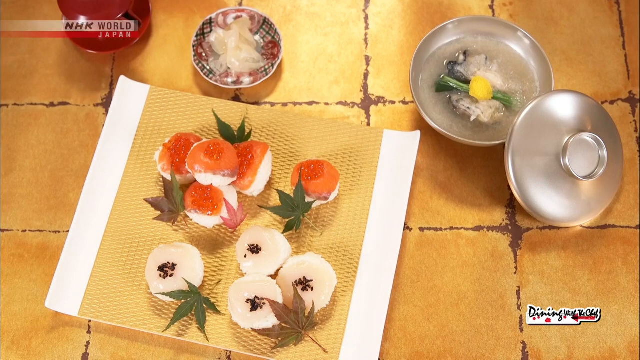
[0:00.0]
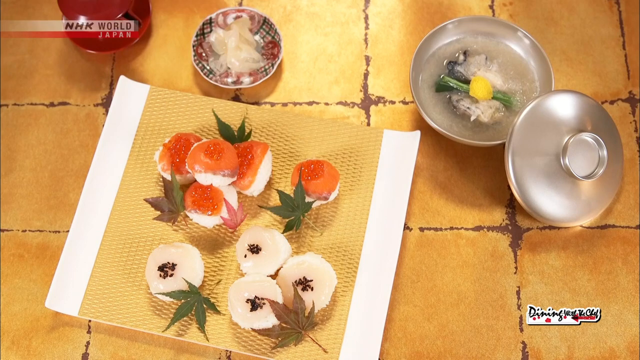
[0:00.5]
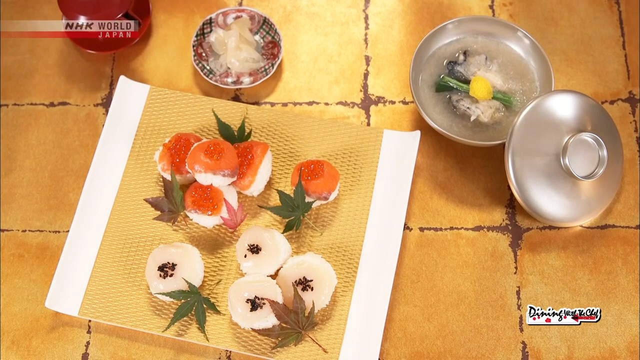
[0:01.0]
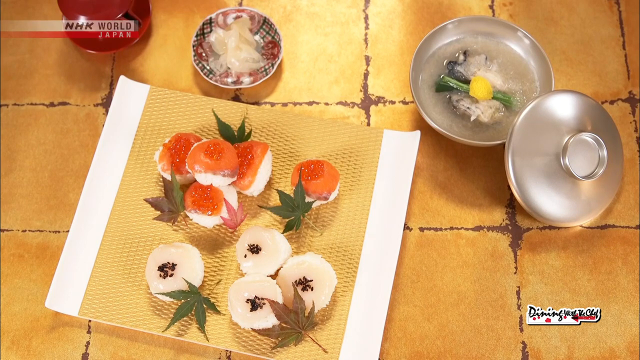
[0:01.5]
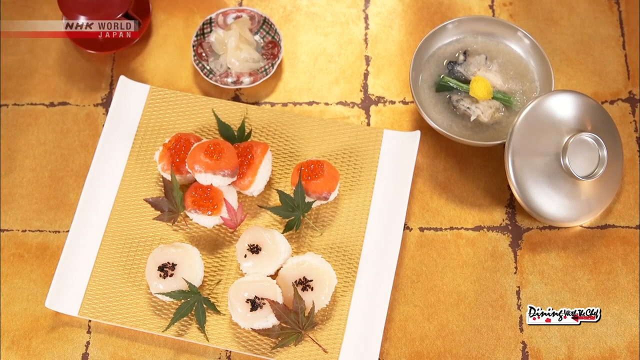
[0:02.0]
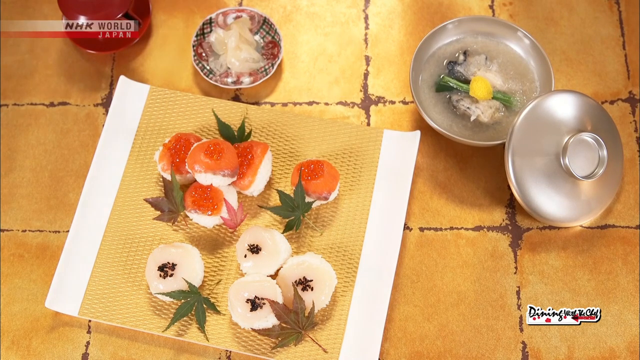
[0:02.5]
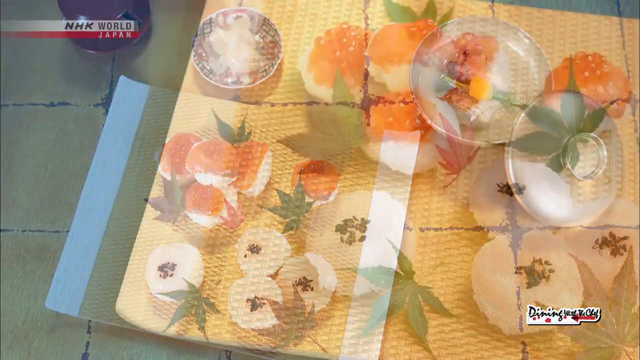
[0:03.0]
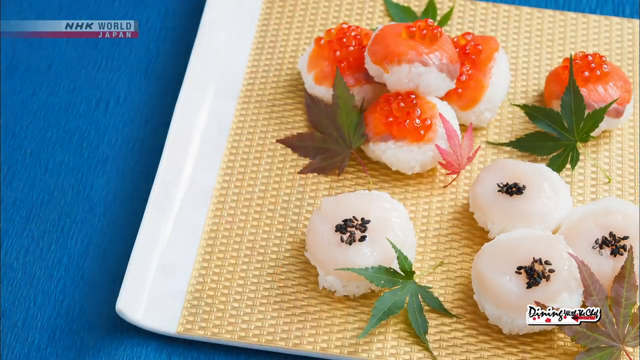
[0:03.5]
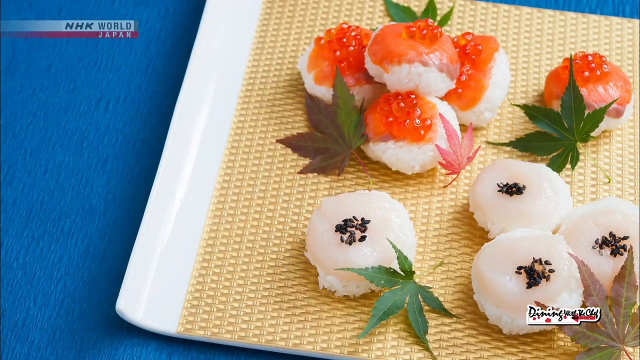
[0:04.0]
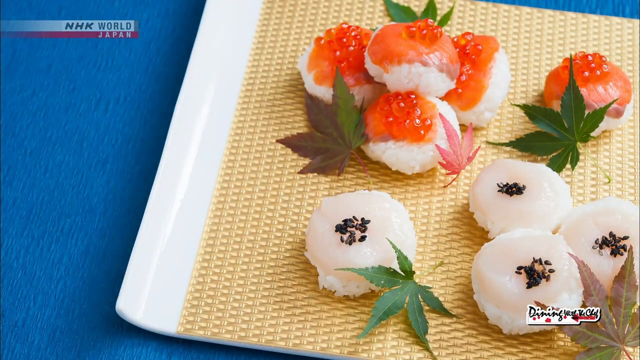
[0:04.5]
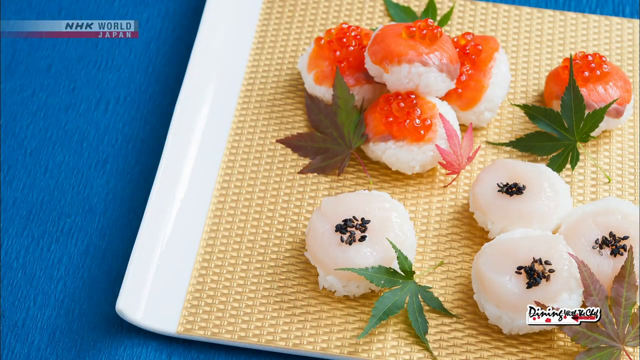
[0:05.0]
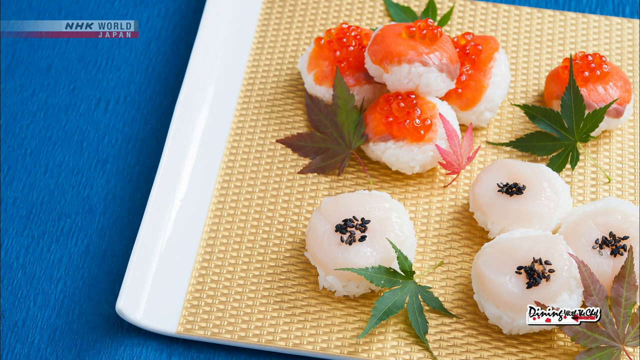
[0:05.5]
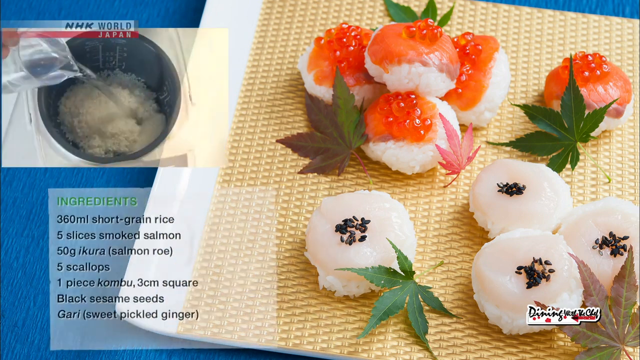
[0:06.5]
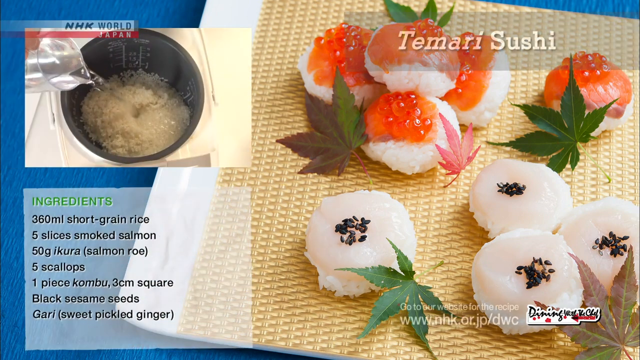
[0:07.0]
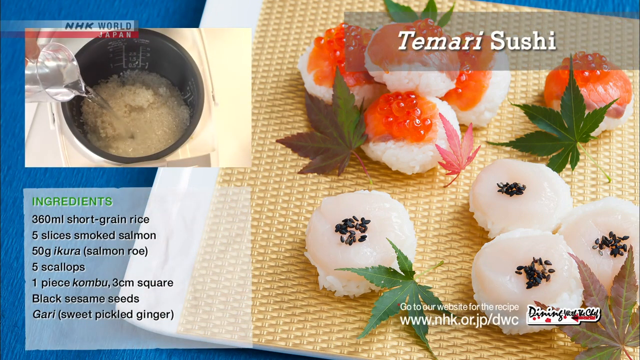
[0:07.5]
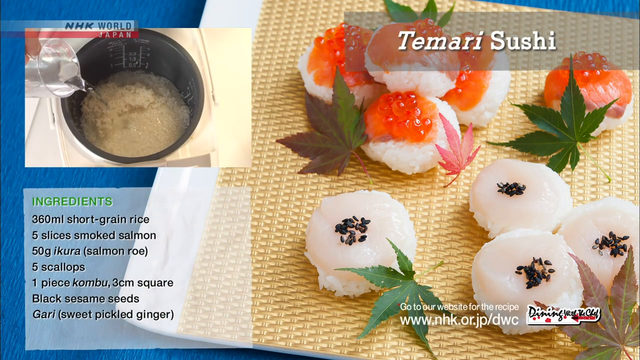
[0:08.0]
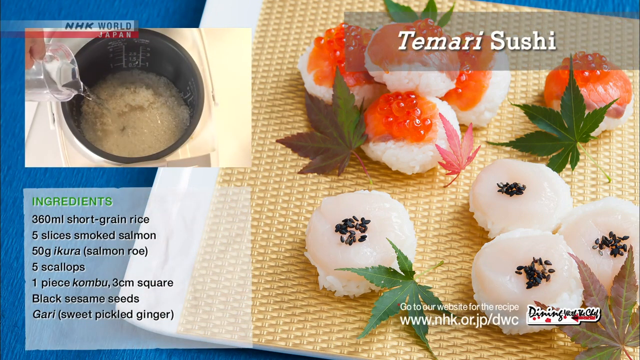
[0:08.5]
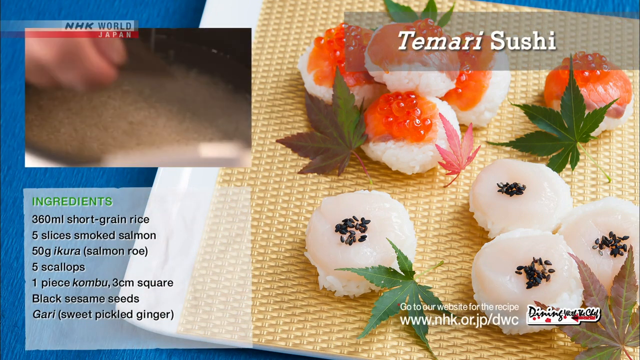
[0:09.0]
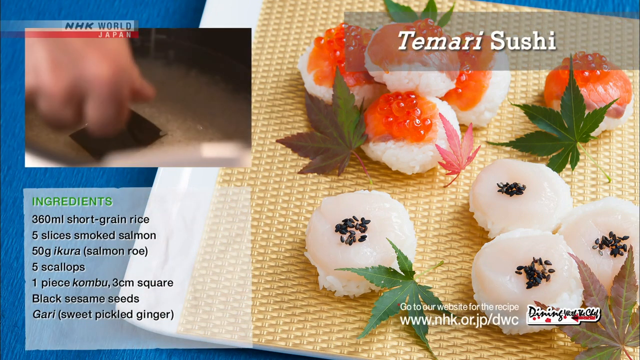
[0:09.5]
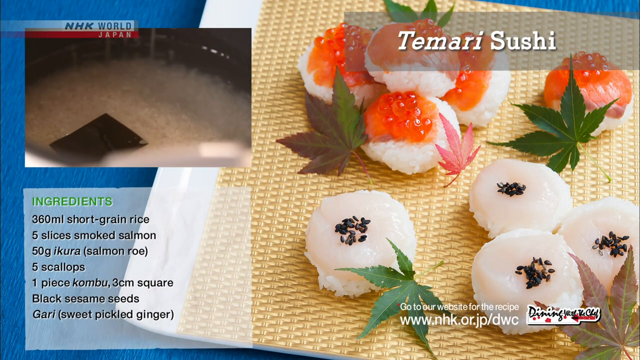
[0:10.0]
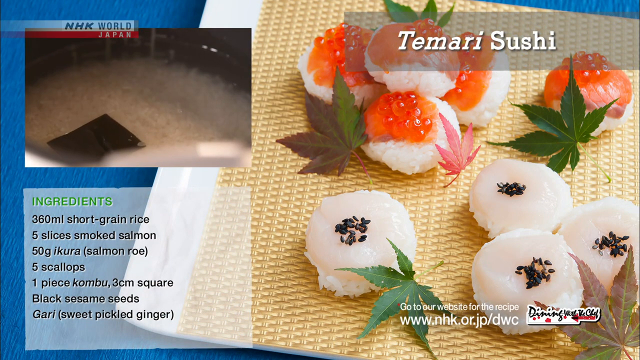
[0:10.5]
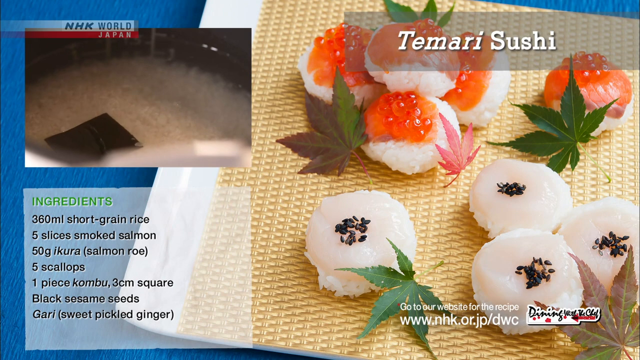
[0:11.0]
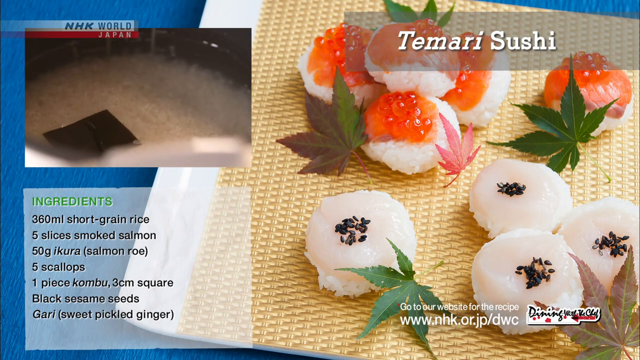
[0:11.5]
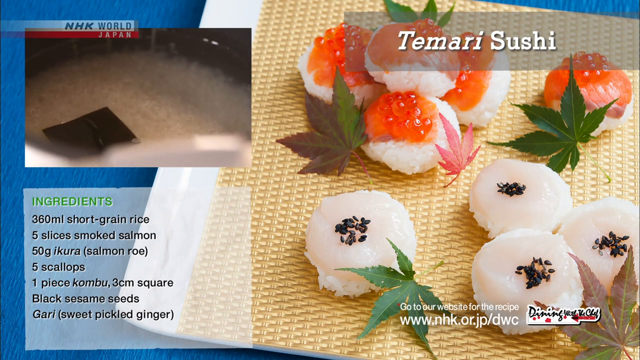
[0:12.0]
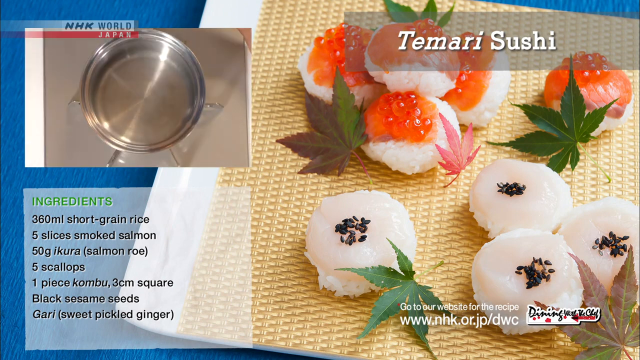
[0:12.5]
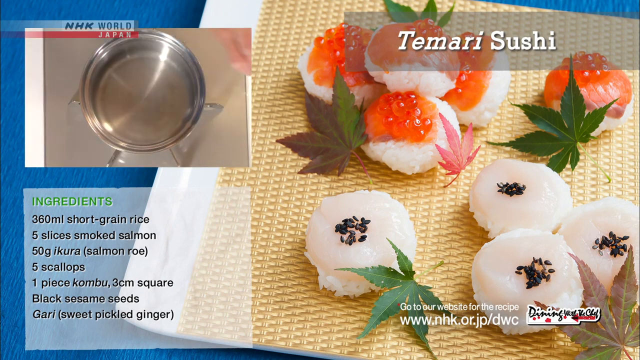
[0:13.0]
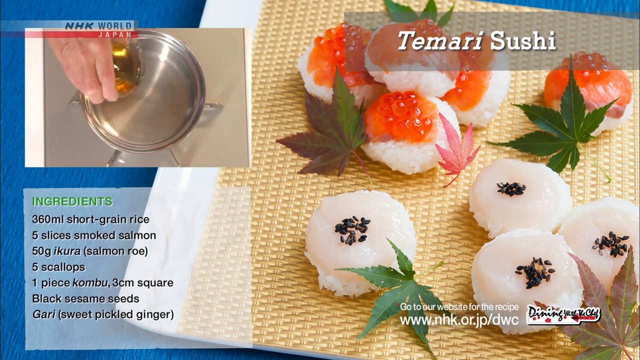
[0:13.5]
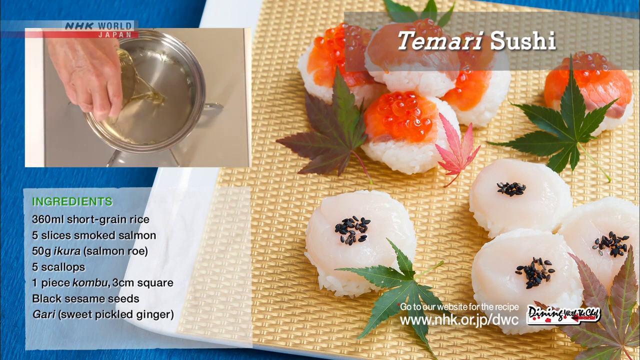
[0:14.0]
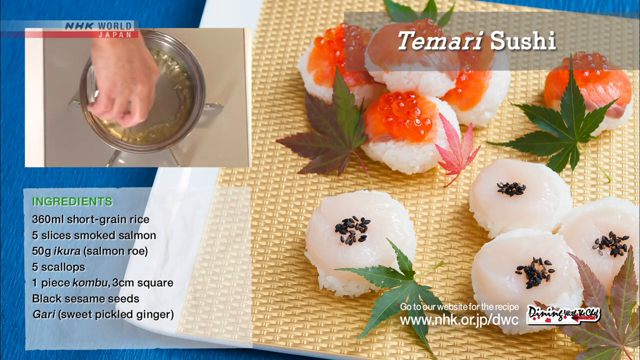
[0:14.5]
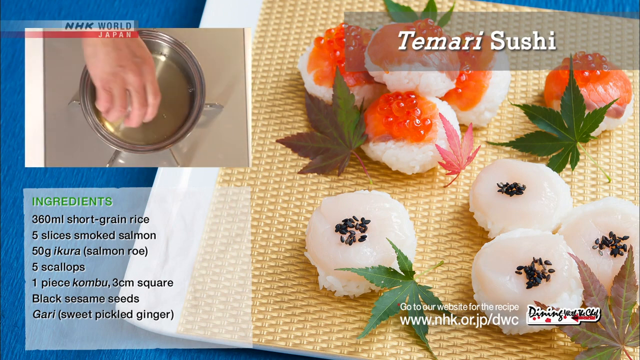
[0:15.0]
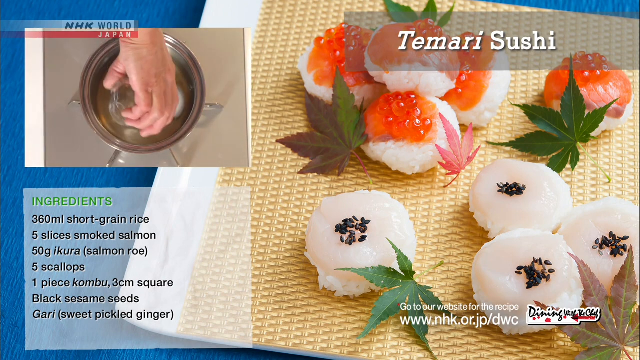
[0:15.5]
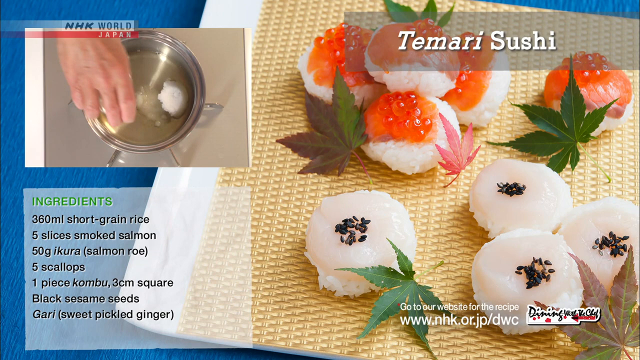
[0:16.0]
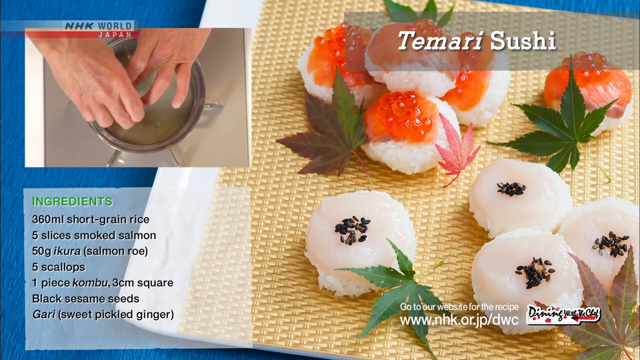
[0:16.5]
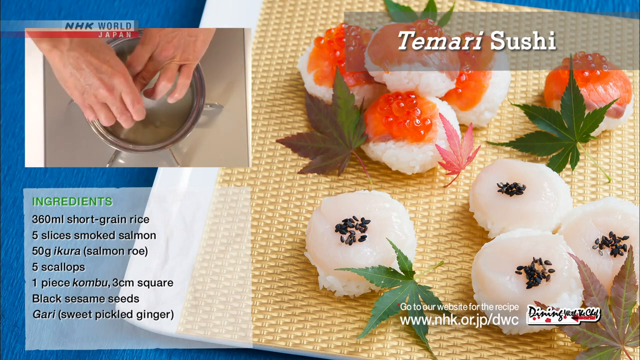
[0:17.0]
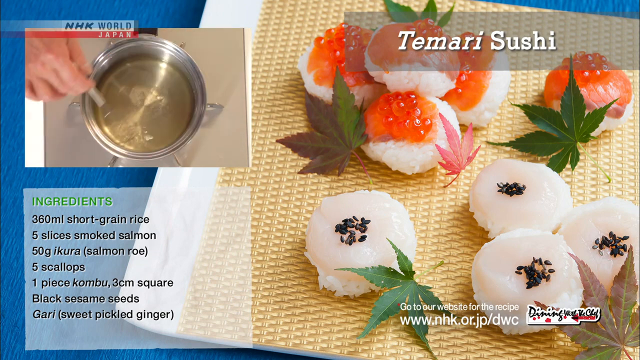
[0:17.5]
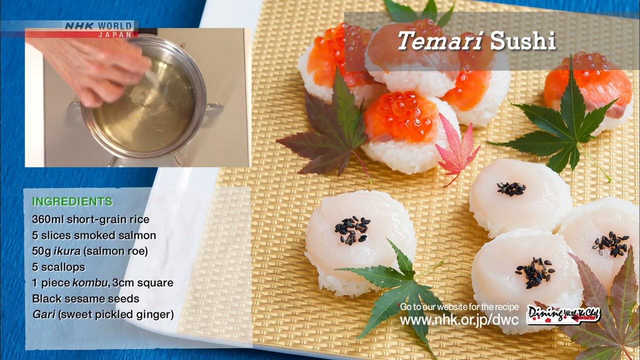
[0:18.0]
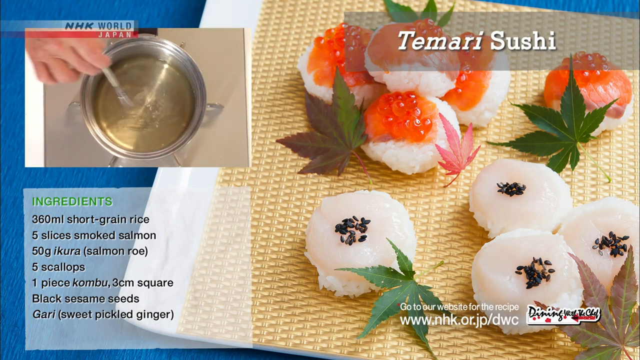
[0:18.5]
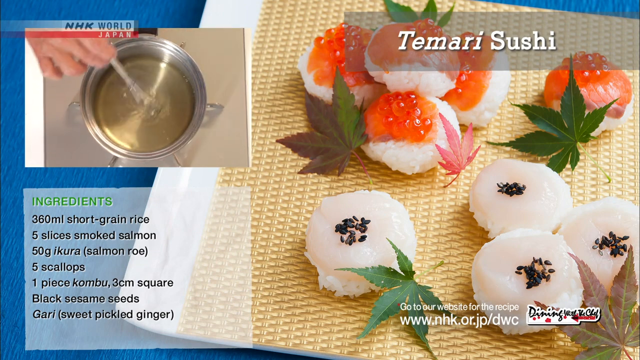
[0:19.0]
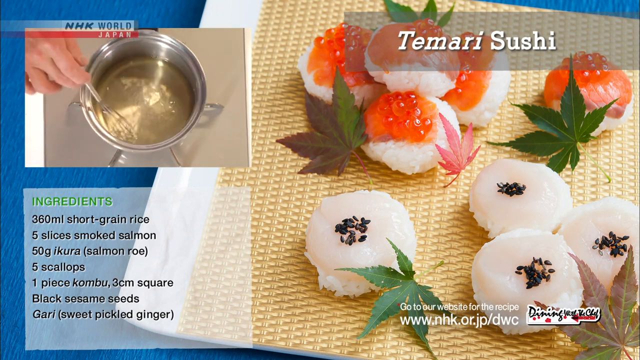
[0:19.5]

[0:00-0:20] Some sort of sushi is on a plate. In the upper right-hand corner there is what looks to be a rice porridge in a tin container with a tin lid, and on the small dish in front of the sushi there appears to be pickled onion. In the top left-hand corner is what looks to be a newscast or broadcast symbol that reads "NHK World, Japan." The image then switches to close-ups of the sushi. One piece looks to be a sushi ball with a thin piece of salmon and fish roe on top; the other looks to be a ball of rice with some sort of white fish and black sesame seeds on top. Decorative leaves are between the pieces of sushi. Text then pops on screen that says "tamari sushi." A video of a person cooking rice plays in the top left-hand corner, with an ingredient list below it: 360 milliliters short grain rice, five slices smoked salmon, 50 grams ikura or salmon roe, five scallops, one piece of kombu or 3 cm square, black sesame seeds, and sweet pickled ginger. The video in the top left-hand corner continues to show how to make the sushi.